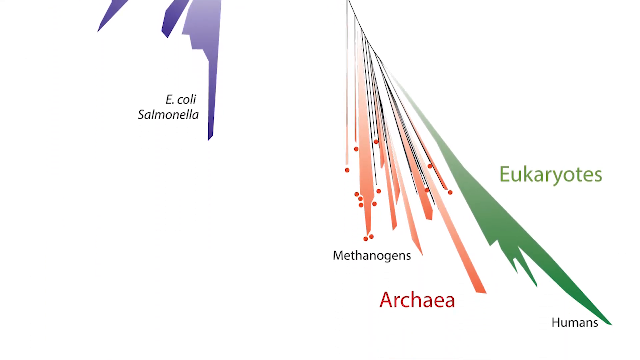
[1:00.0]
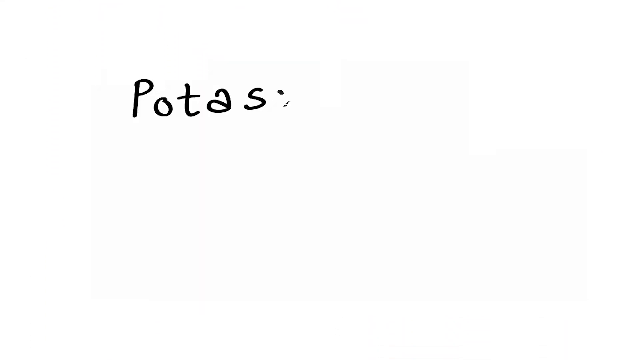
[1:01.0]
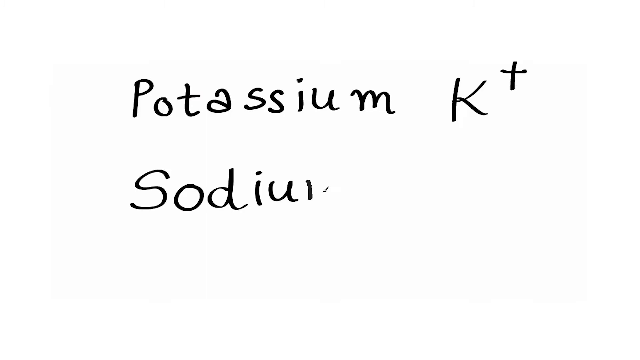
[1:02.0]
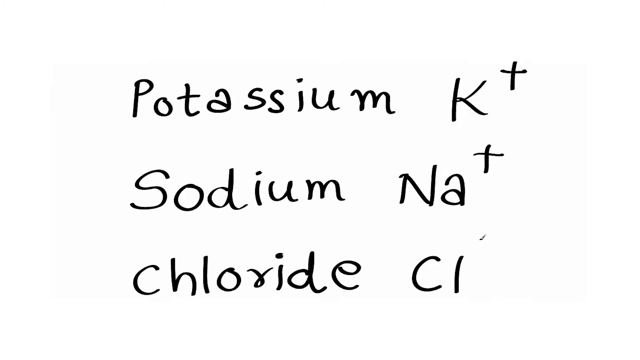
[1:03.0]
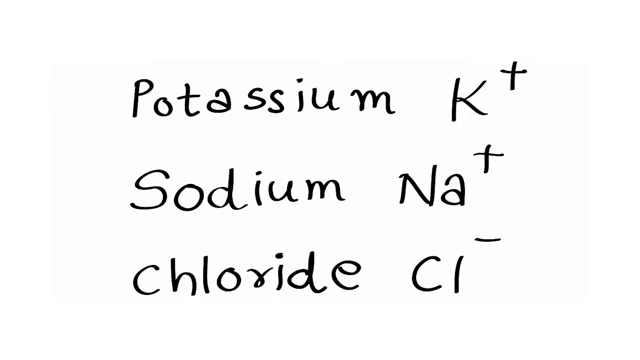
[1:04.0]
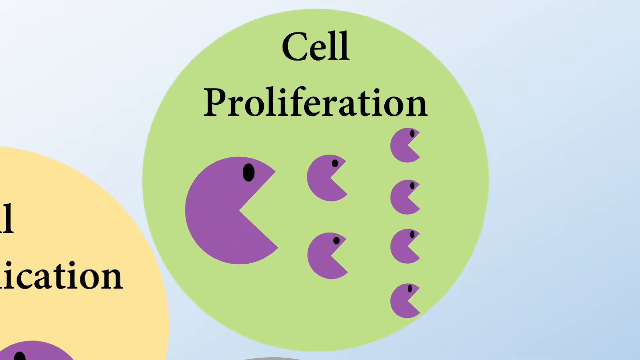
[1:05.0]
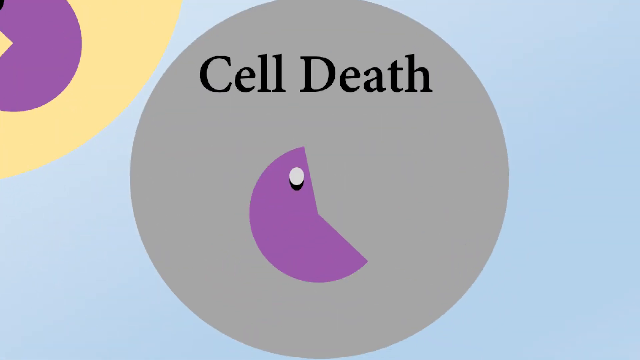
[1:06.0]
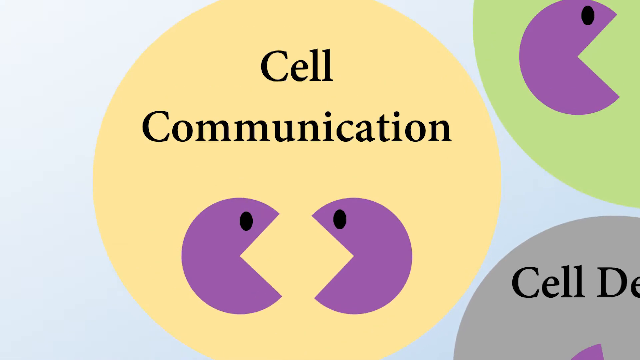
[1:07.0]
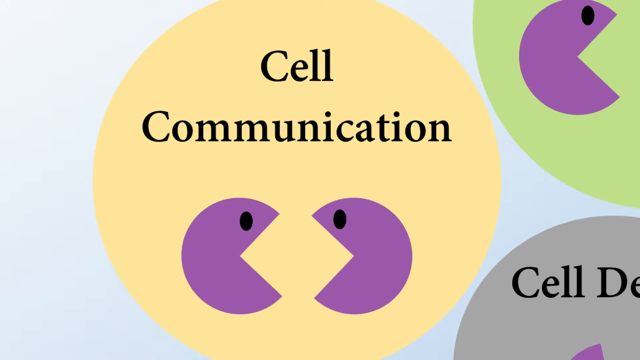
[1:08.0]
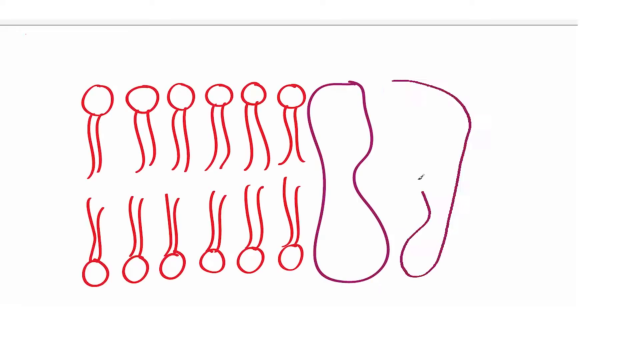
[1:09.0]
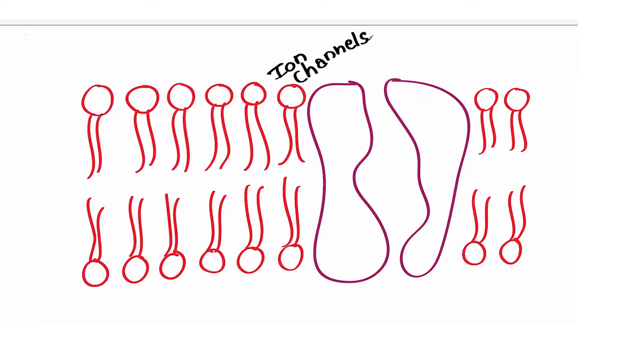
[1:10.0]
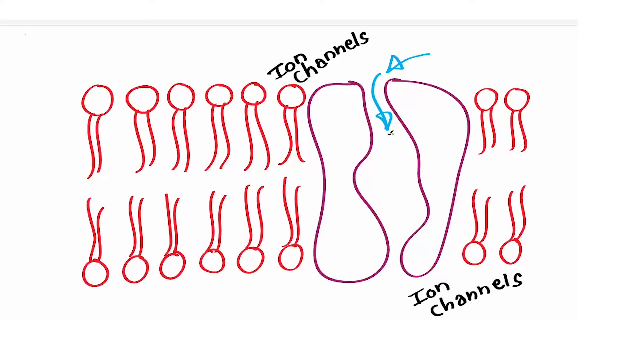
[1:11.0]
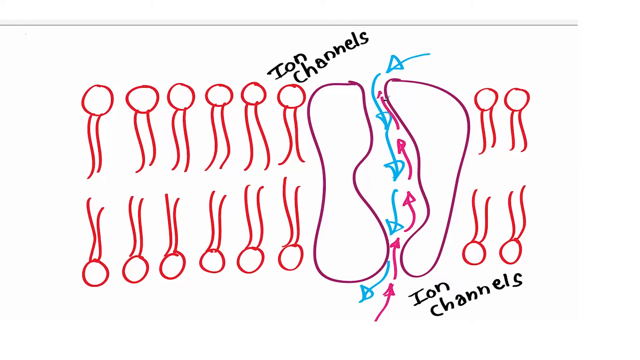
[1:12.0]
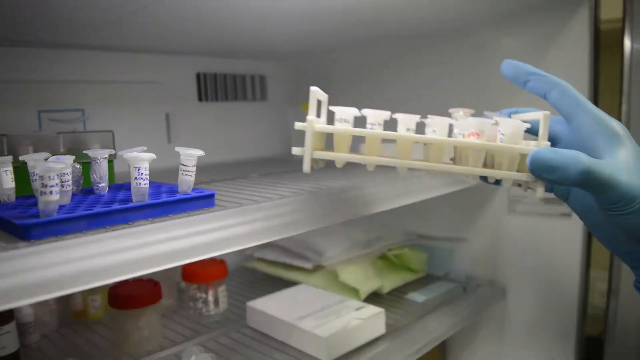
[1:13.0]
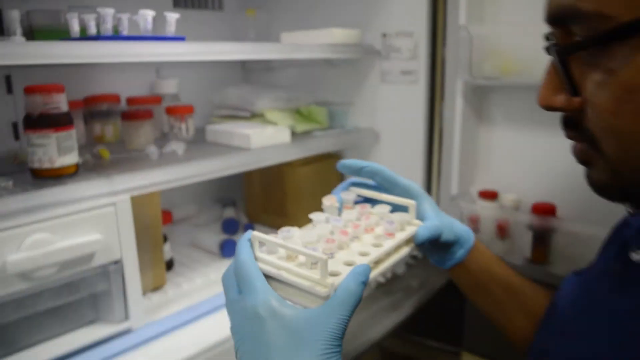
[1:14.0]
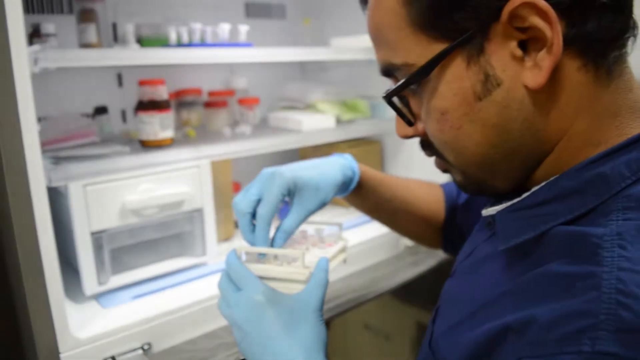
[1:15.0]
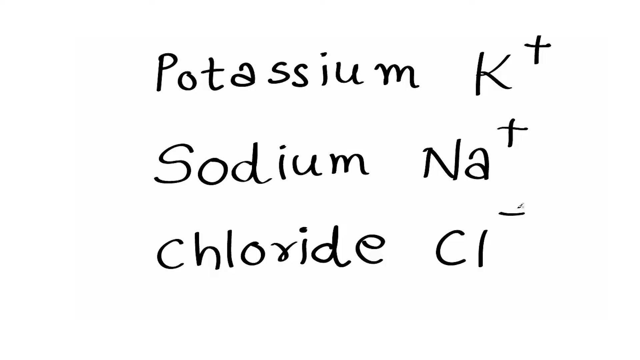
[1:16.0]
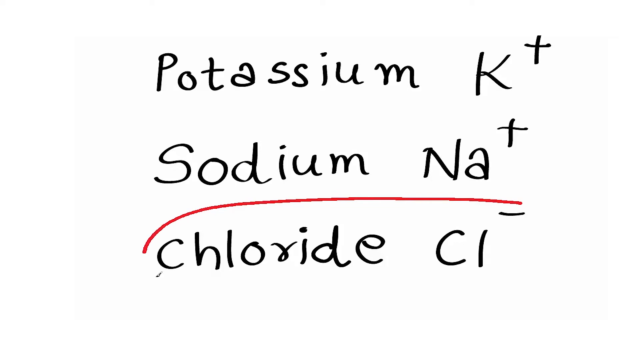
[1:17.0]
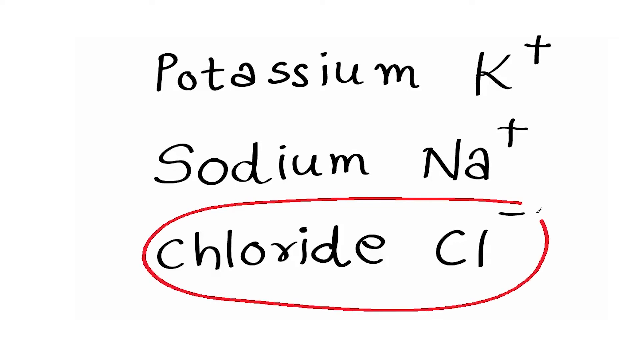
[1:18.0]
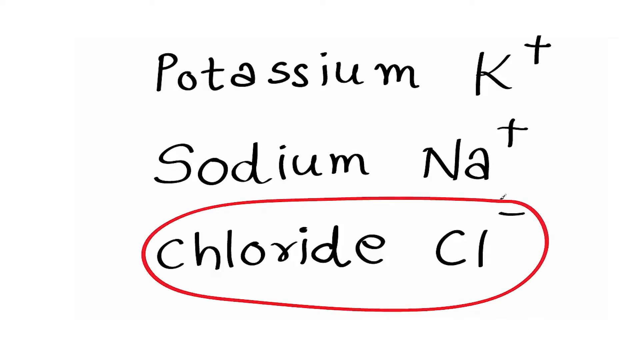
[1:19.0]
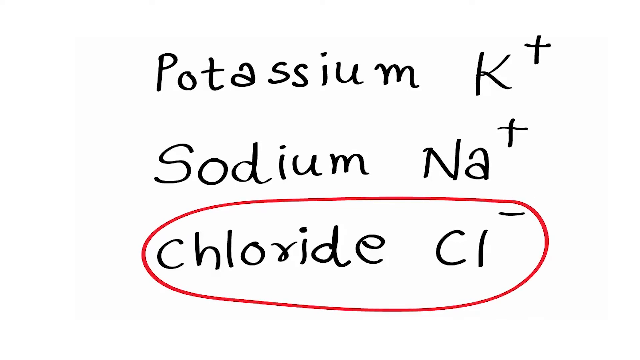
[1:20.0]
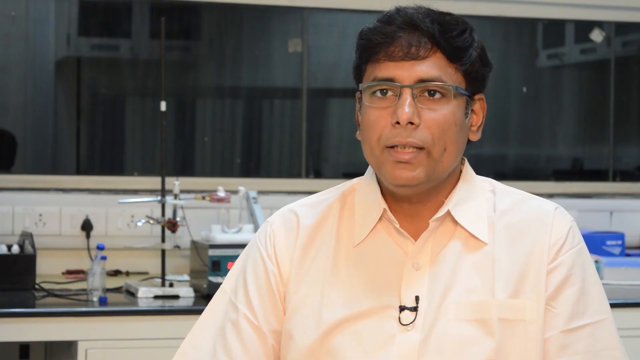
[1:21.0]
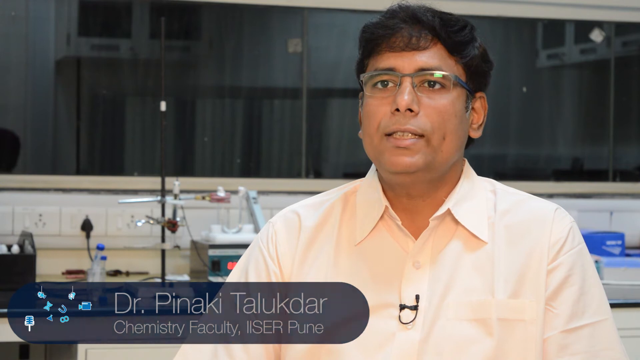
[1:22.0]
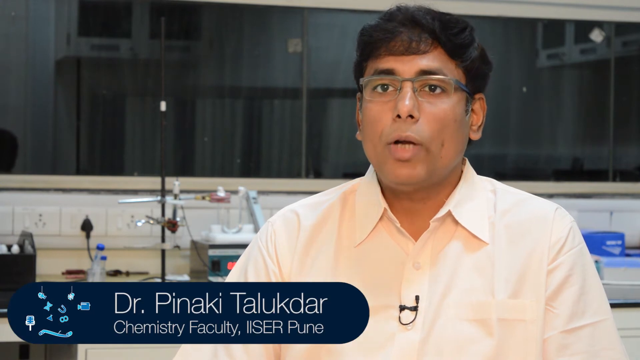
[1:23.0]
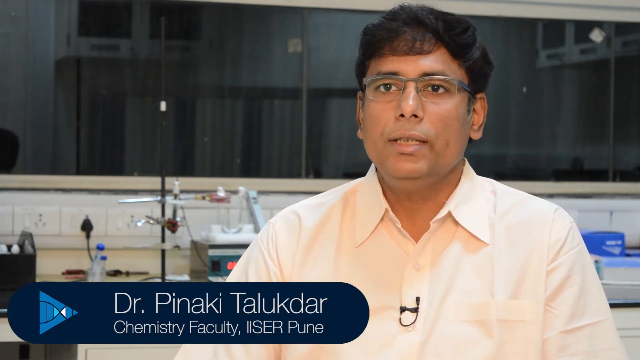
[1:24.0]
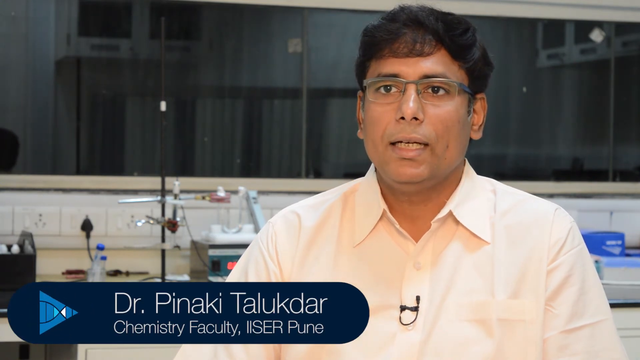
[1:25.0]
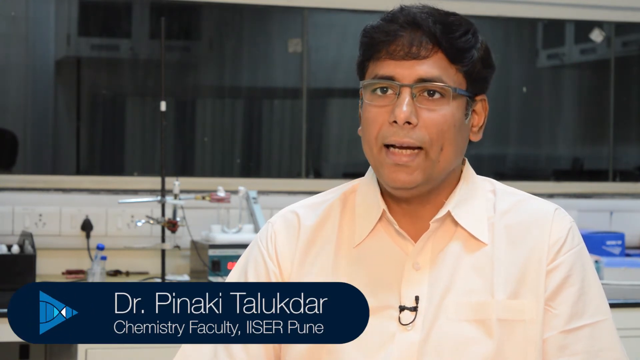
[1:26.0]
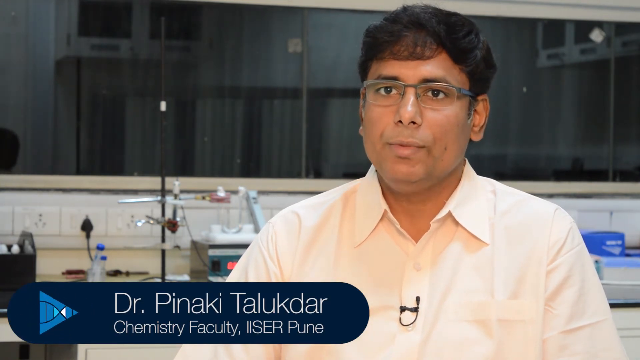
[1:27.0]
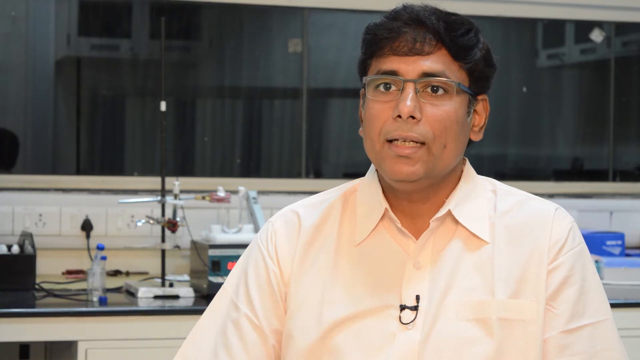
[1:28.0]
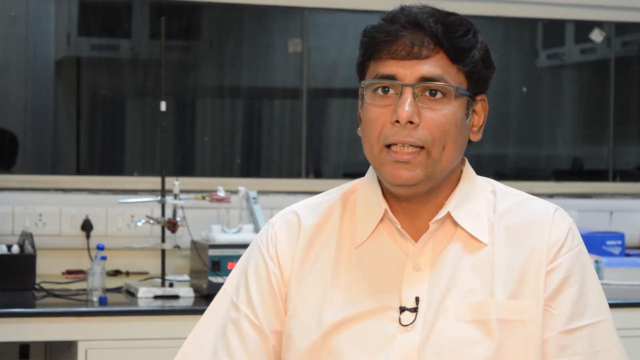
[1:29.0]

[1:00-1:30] A color diagram in purple, pink, red and green appears, with "humans" at the very bottom right. In green letters is "EUKARYOTES", associated with the red is "ARCHAEA", and associated with the blue is "E. coli salmonella". Next come potassium (K+), sodium (Na+) and chloride (Cl-). Then "cell proliferation" and "cell death" appear, with "cell communication" between the two. Finally, ion channels are shown, looking like tubular shapes with round tops.